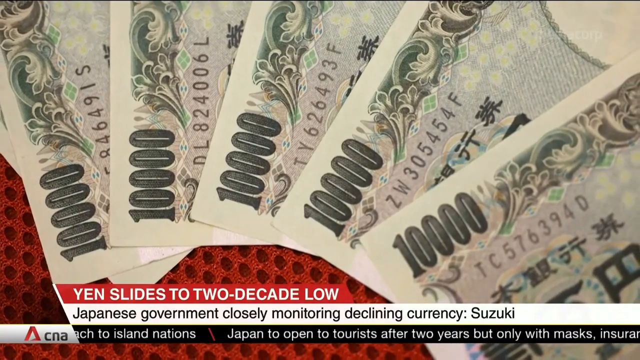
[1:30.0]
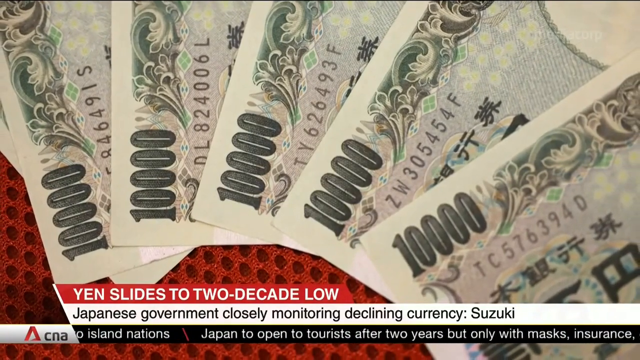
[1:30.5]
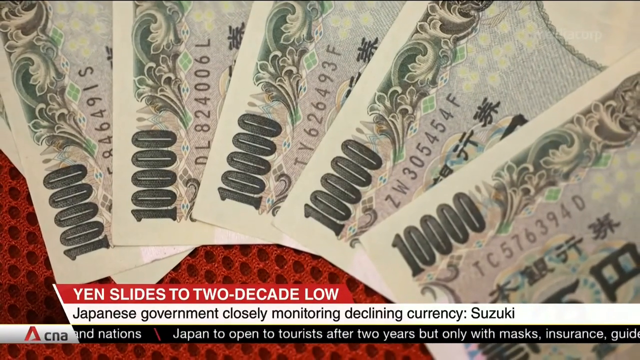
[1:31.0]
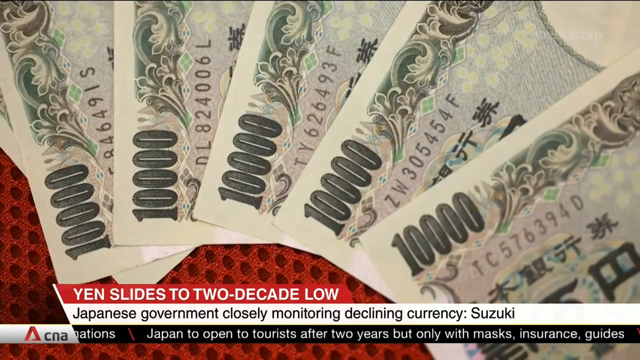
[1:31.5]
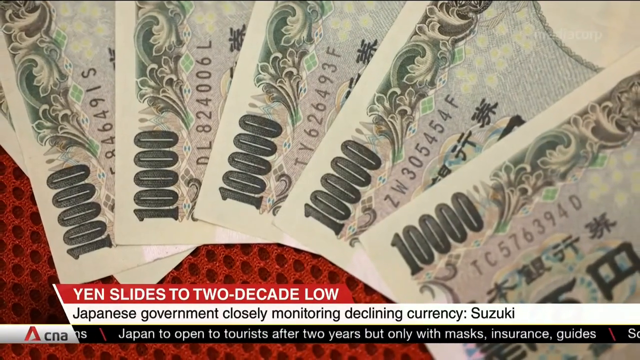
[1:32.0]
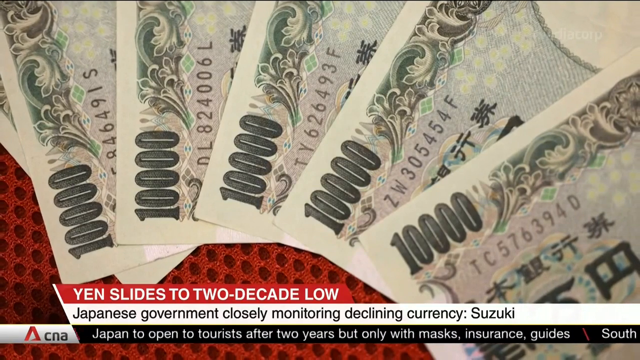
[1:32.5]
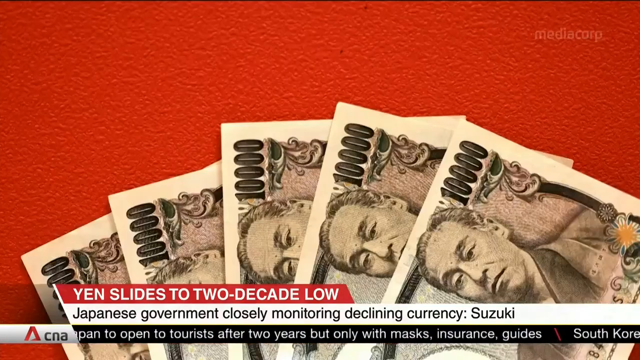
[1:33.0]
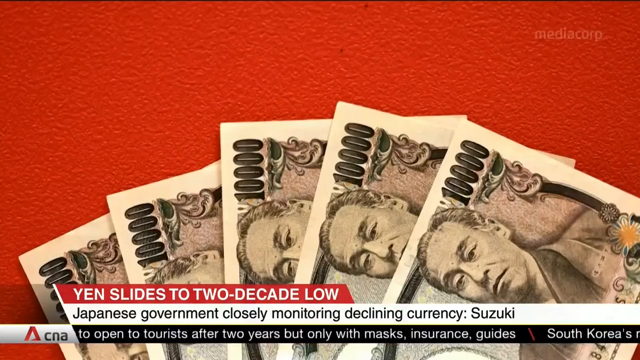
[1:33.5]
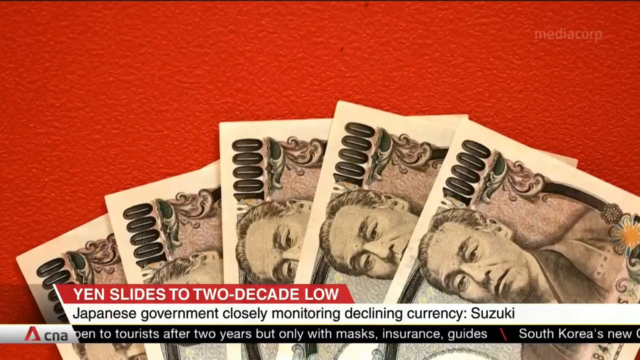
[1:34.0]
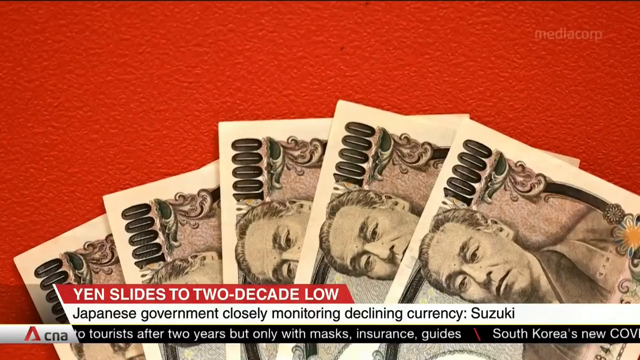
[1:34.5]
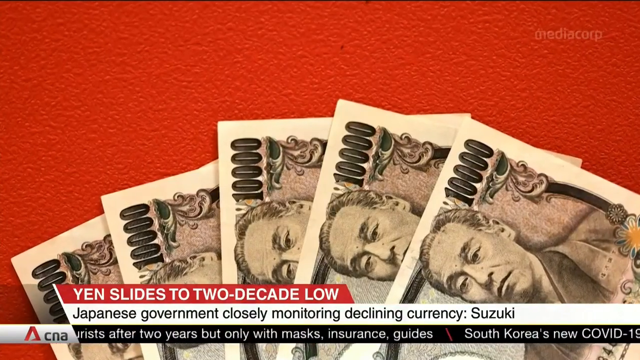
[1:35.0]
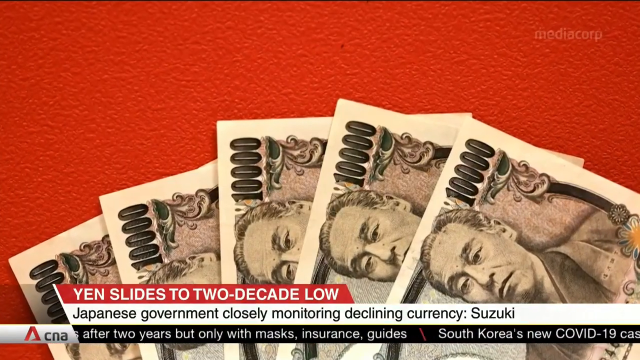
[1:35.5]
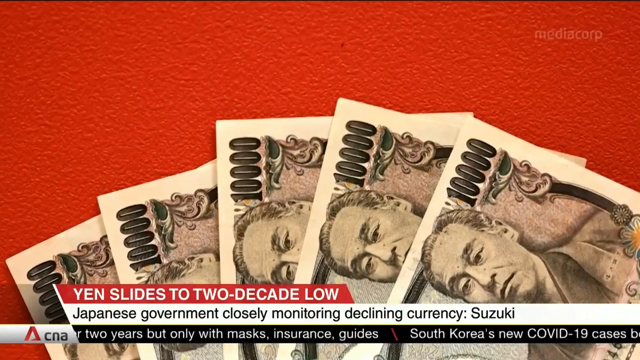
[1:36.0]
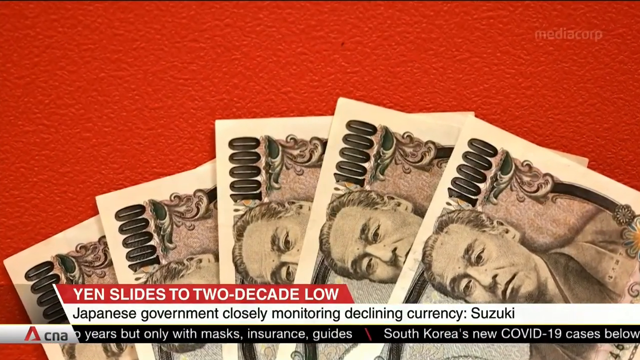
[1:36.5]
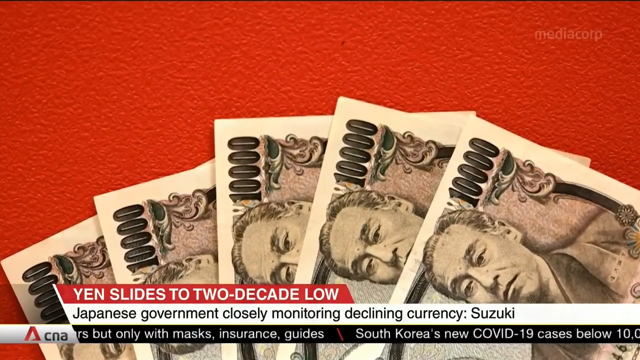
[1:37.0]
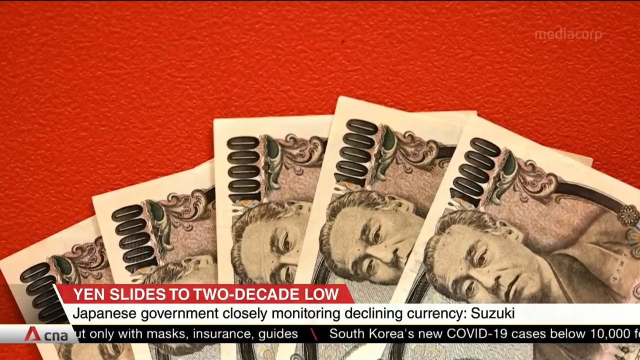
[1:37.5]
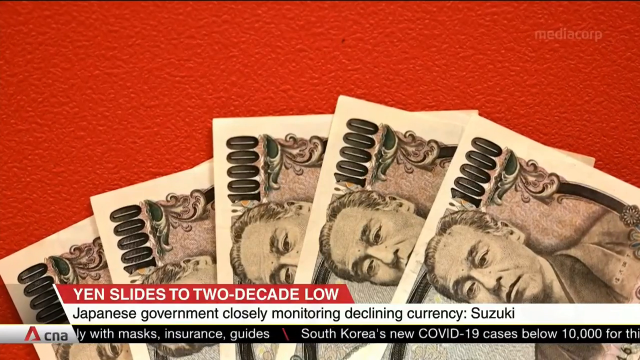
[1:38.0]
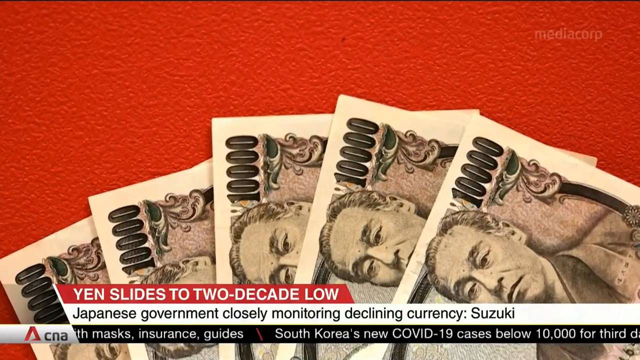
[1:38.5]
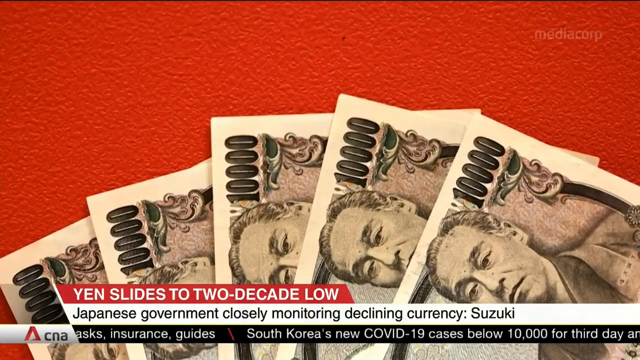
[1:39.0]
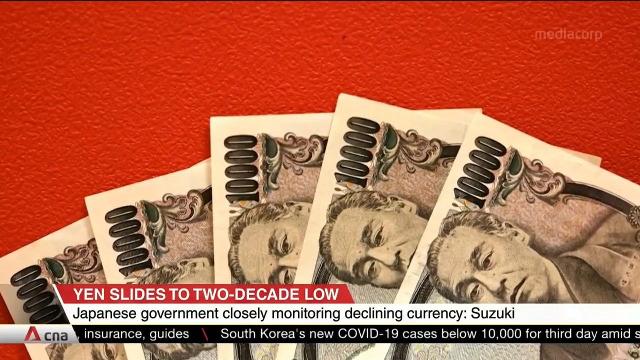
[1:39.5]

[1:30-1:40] Headlines read "Japan to open to tourists after two years but only with mask assurance guides" and "South Korea's new COVID-19 cases below 10,000 for a third day." A three-row text box has a top row with a red and white background and all-capital letters reading "yen slides to two-decade low." Underneath, on a white background in black font and not in all capitals, it reads "Japanese government closely monitoring declining currency," followed by a capital S for Suzuki, where the text stops. On the right side of the image, someone wearing light blue gloves and a denim jacket, visible at the sleeves, hands two 10,000 yen bills to someone else's right hand, which has no glove.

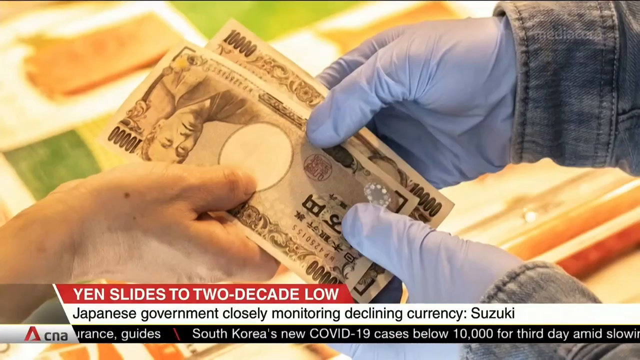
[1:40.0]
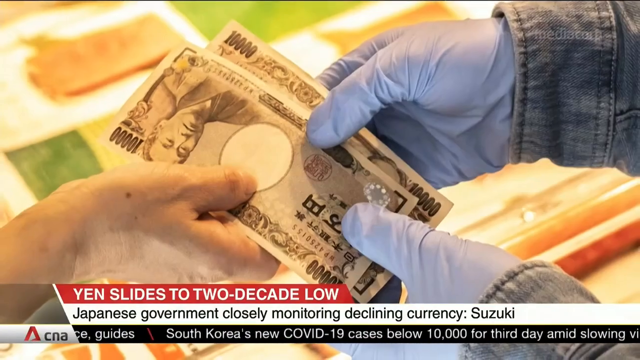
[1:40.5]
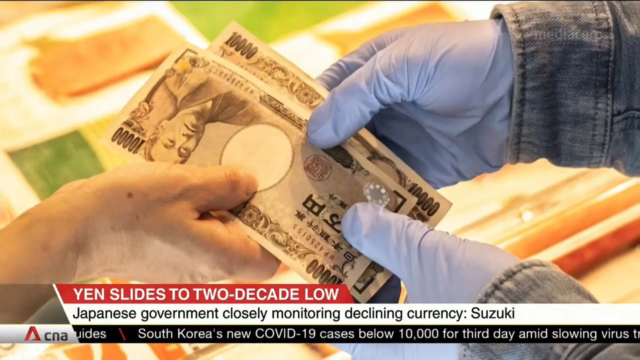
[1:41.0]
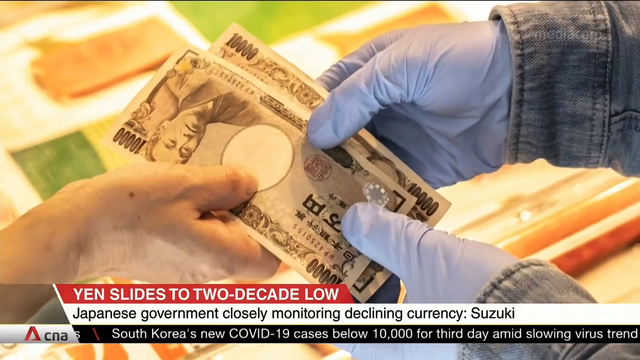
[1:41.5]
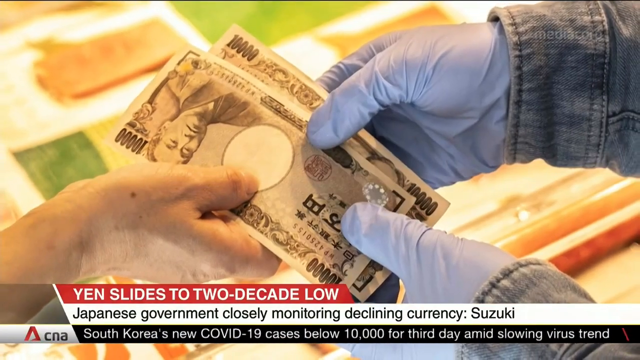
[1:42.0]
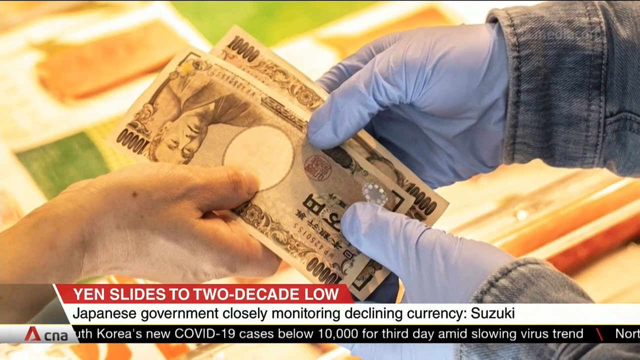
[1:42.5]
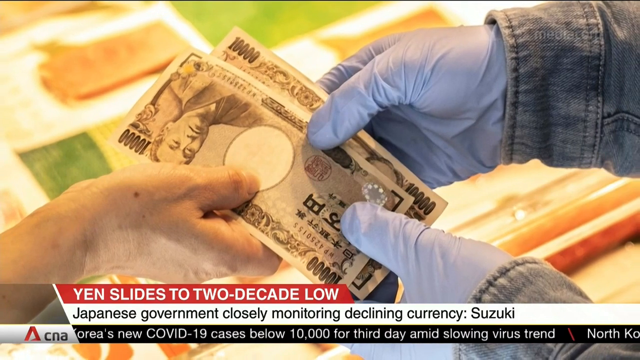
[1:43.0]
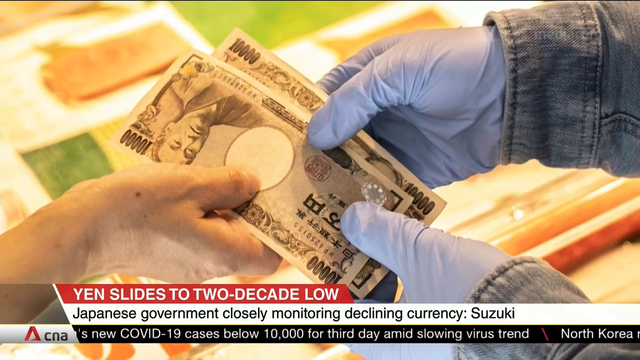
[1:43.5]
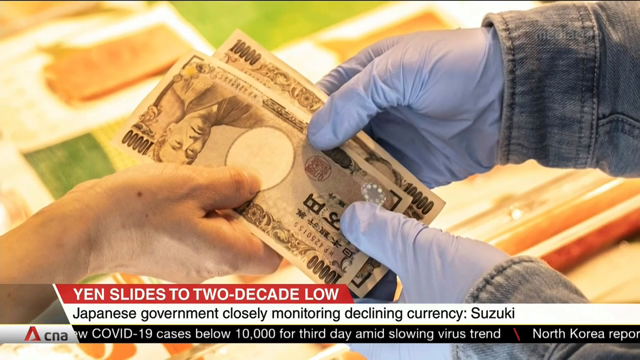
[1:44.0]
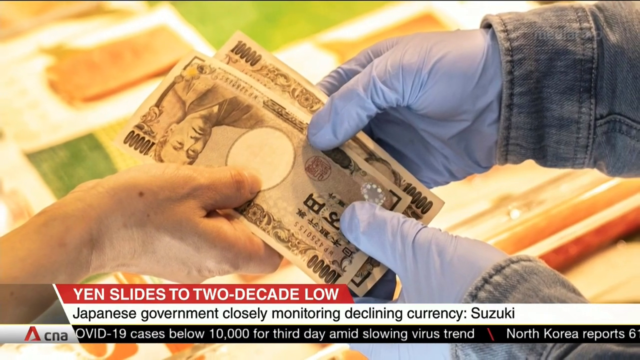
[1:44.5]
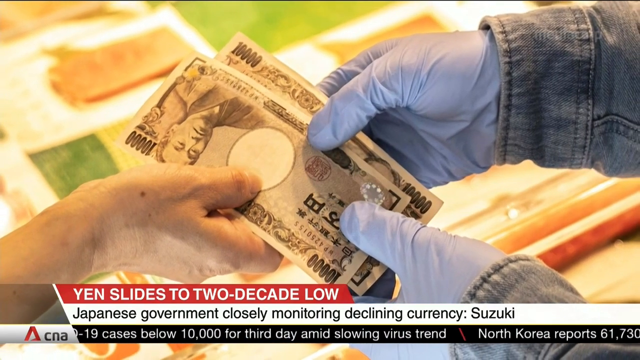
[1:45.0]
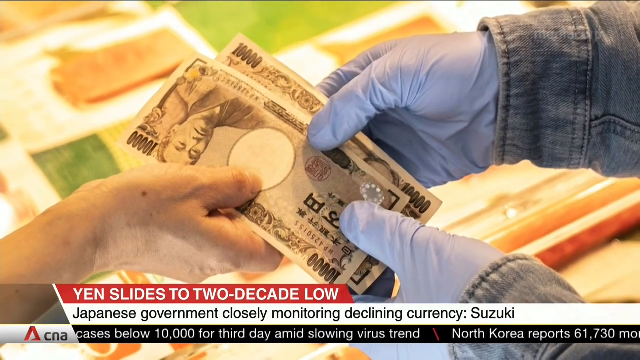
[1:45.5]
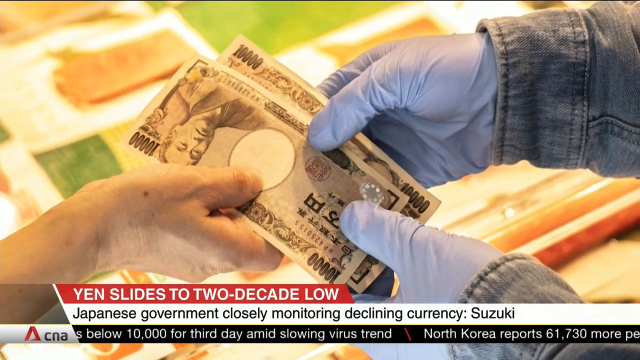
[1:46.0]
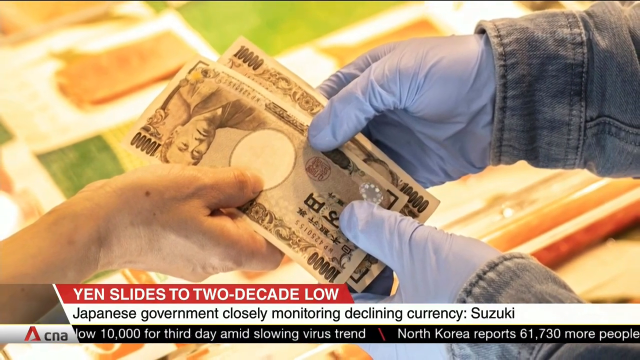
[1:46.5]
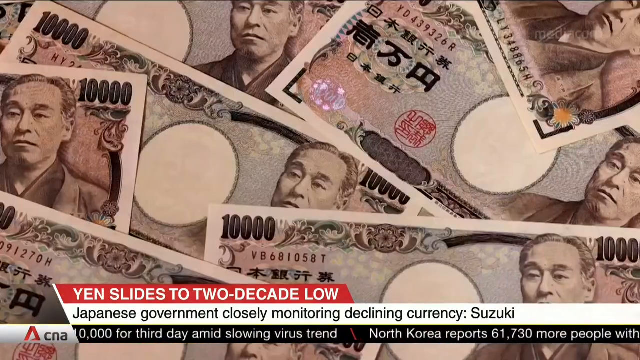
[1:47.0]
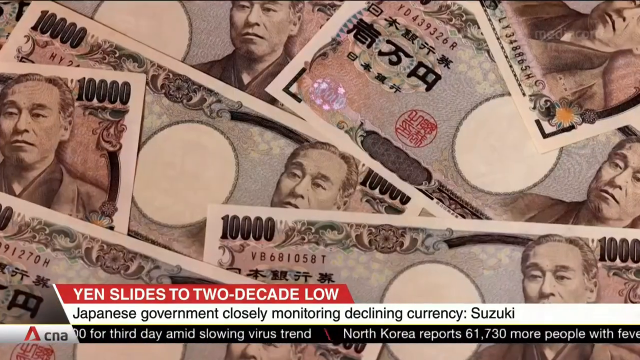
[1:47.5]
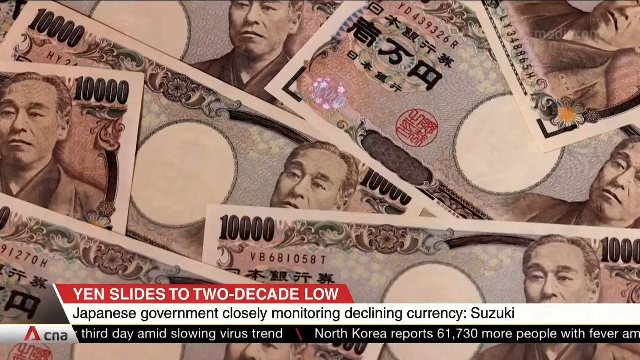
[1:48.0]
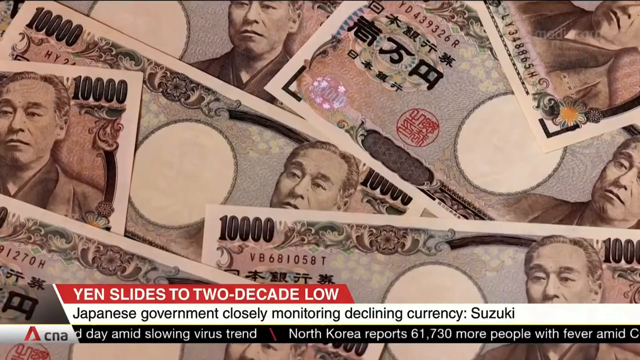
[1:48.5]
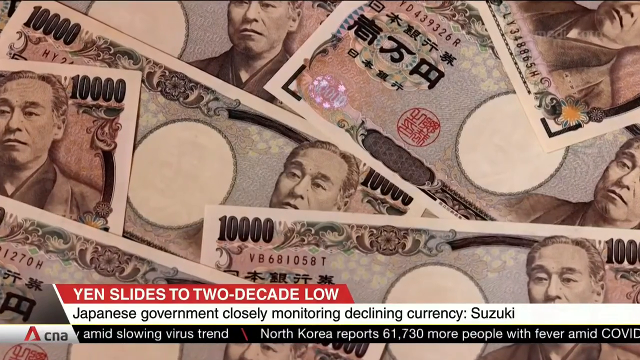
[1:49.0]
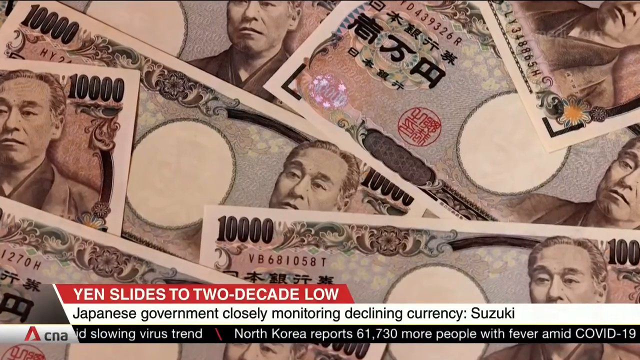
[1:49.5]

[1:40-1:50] Text reads "yen slides to two-decade low" and "North Korea reports 61,000," which is cut off. Above that it reads "Japanese government closely monitoring decline in currency" along with "Suzuki." Many 10,000 yen bills are shown, covering the screen at the end. Each bill has a big oval, almost a circle, in the middle, with someone's face on the right side.